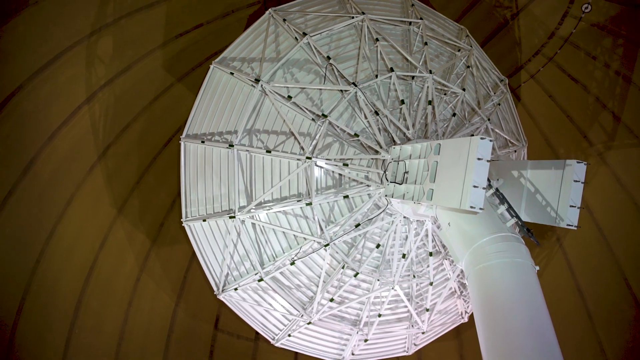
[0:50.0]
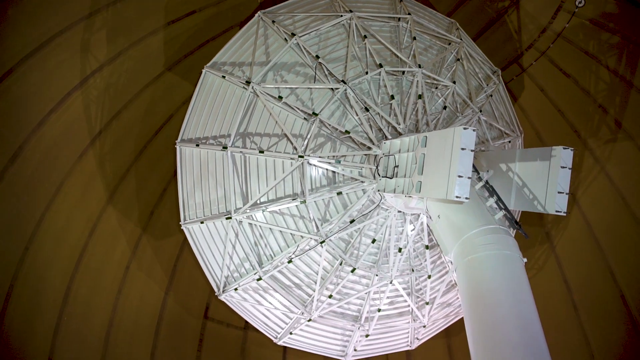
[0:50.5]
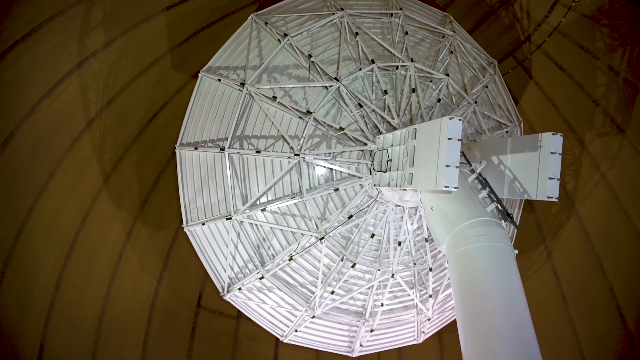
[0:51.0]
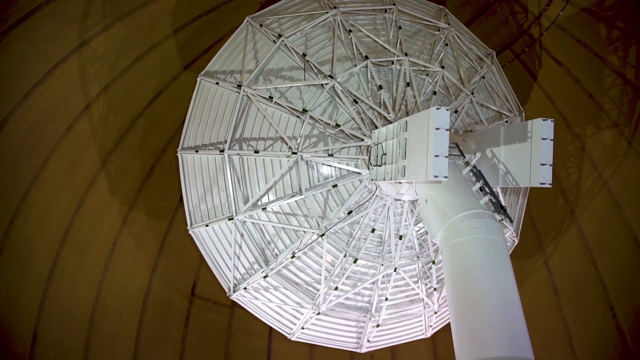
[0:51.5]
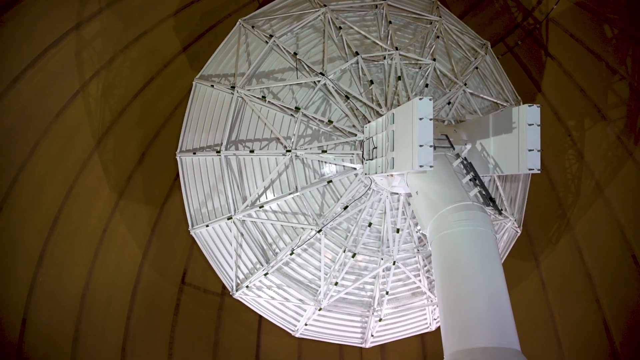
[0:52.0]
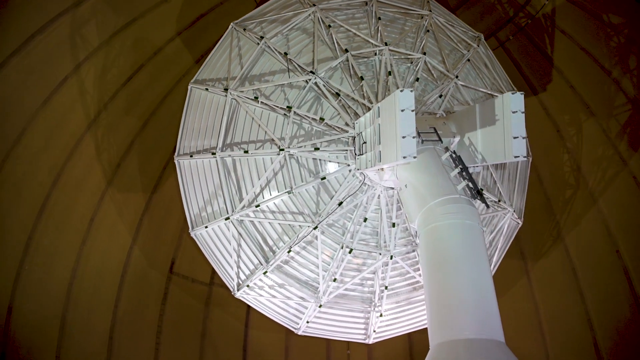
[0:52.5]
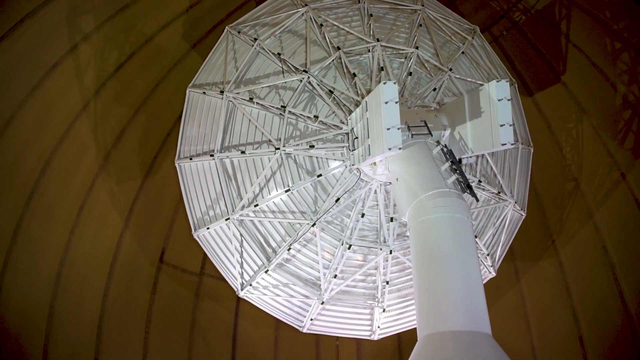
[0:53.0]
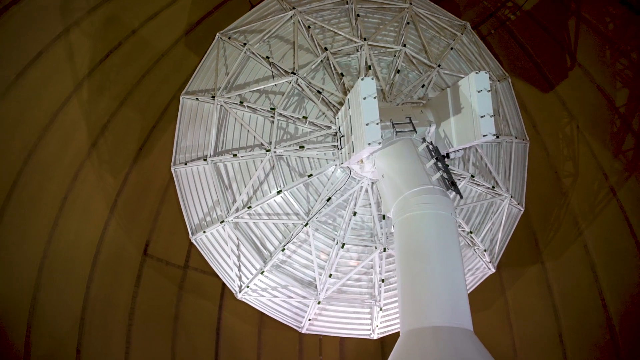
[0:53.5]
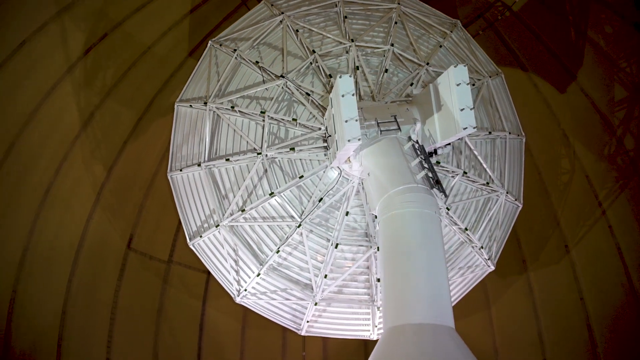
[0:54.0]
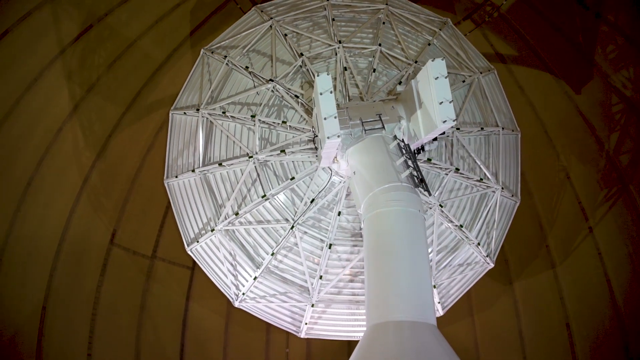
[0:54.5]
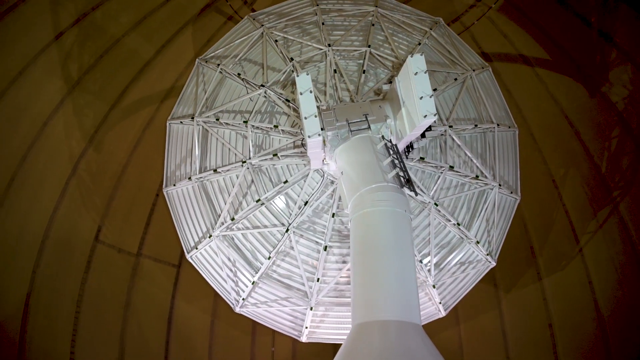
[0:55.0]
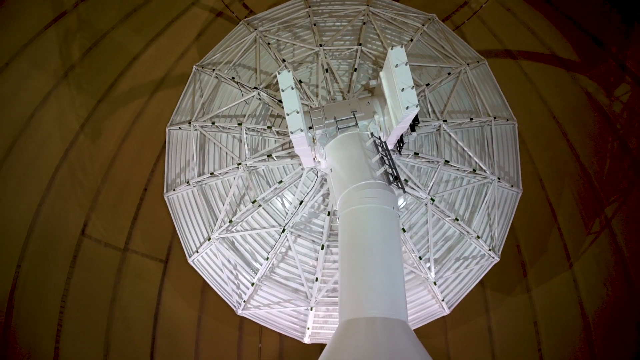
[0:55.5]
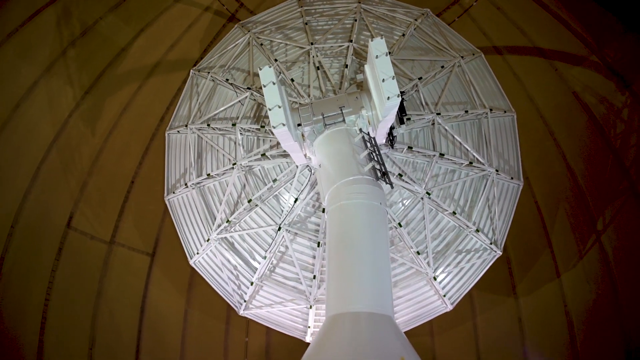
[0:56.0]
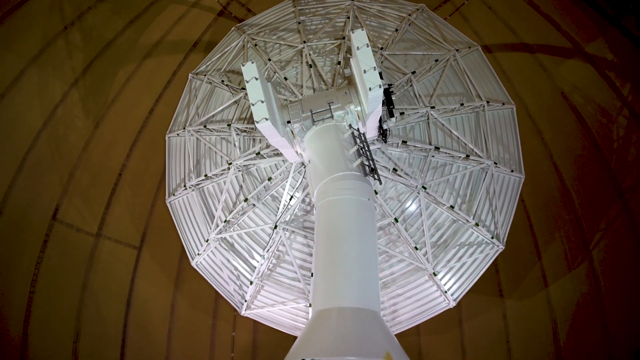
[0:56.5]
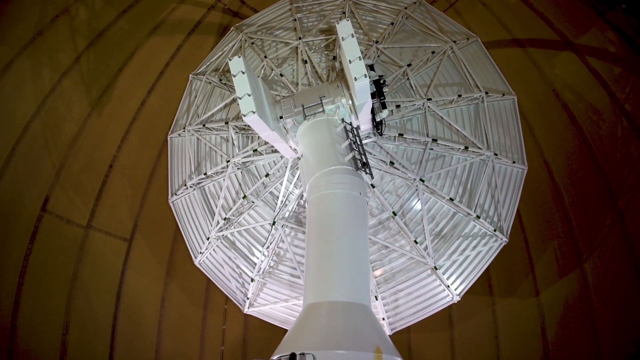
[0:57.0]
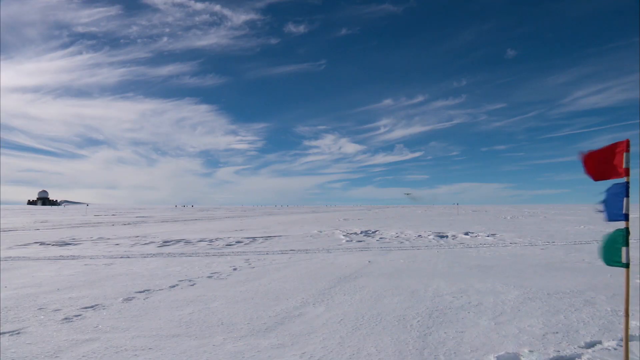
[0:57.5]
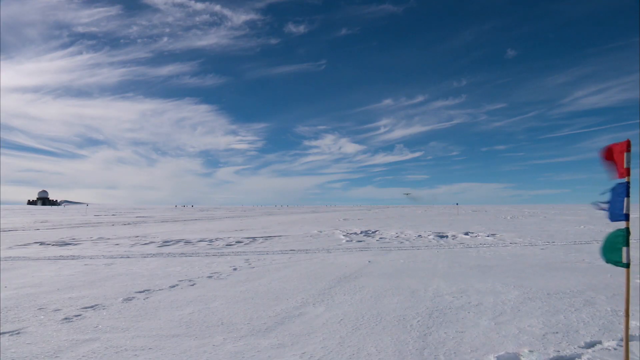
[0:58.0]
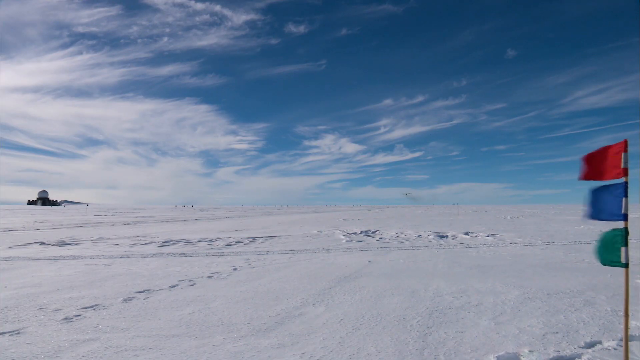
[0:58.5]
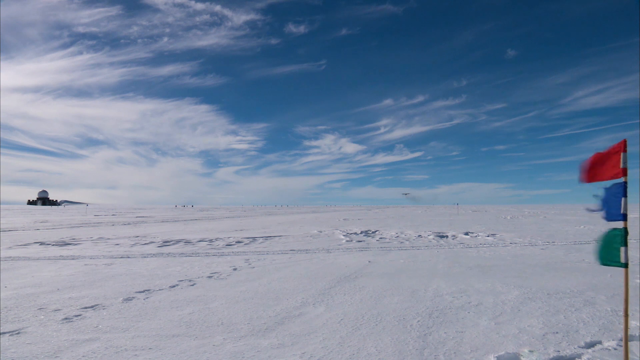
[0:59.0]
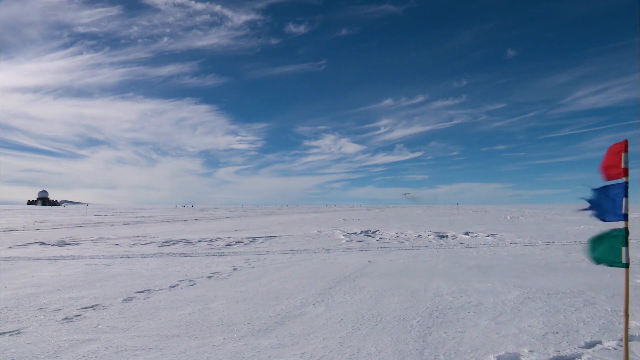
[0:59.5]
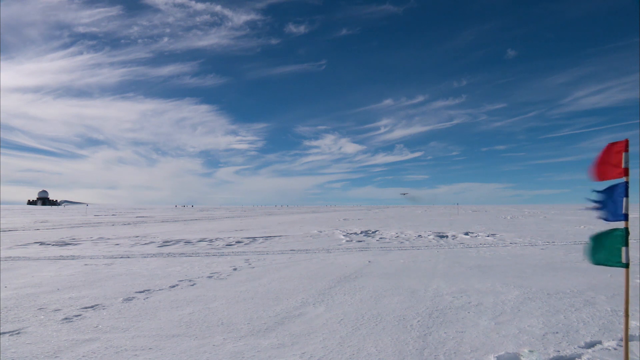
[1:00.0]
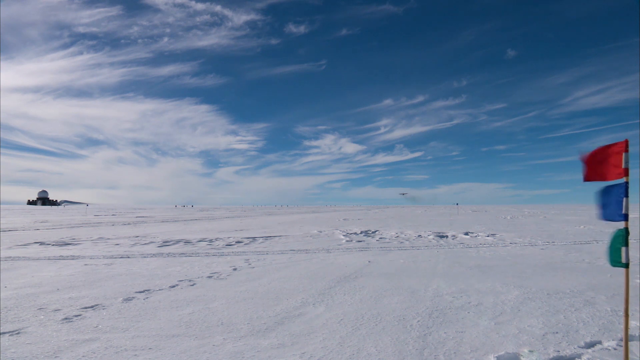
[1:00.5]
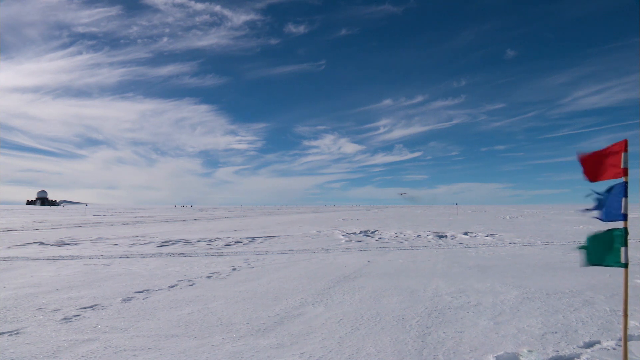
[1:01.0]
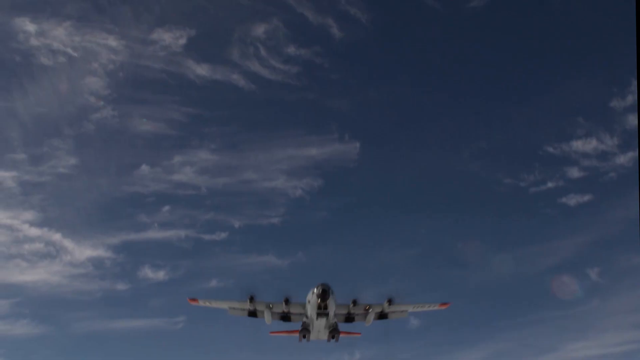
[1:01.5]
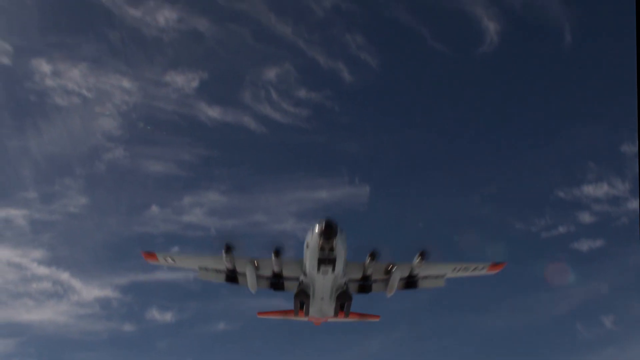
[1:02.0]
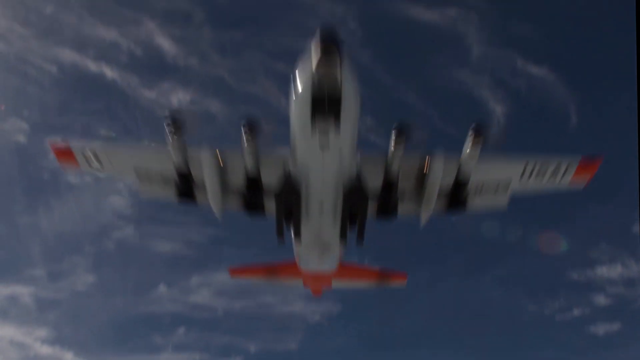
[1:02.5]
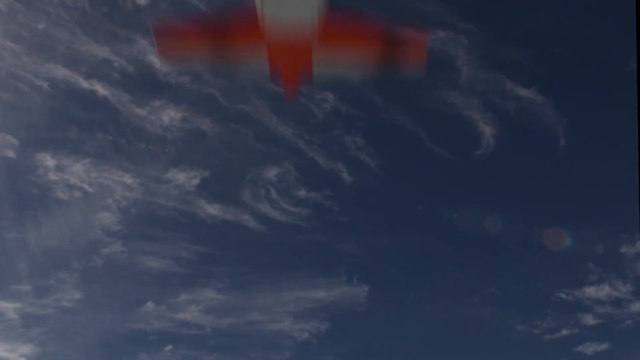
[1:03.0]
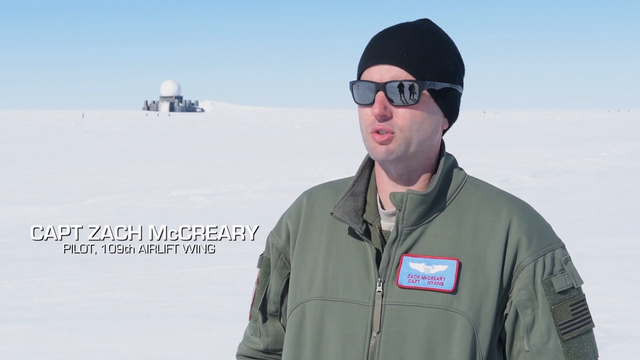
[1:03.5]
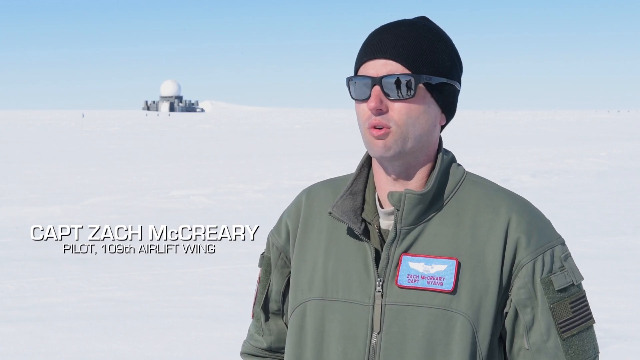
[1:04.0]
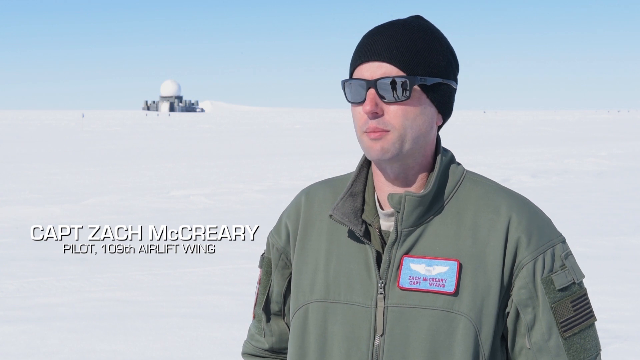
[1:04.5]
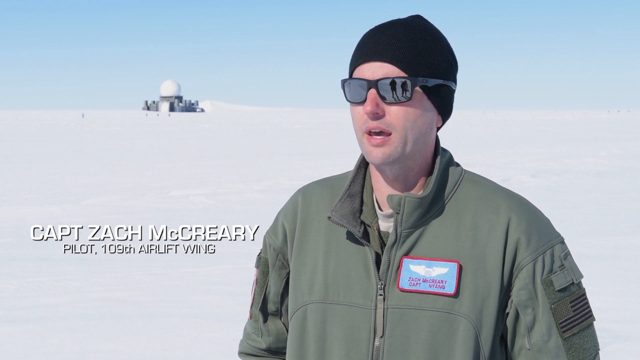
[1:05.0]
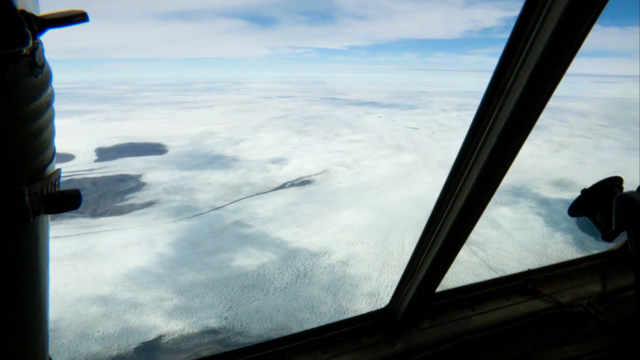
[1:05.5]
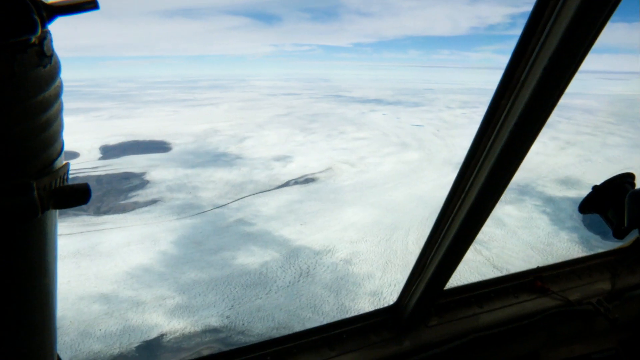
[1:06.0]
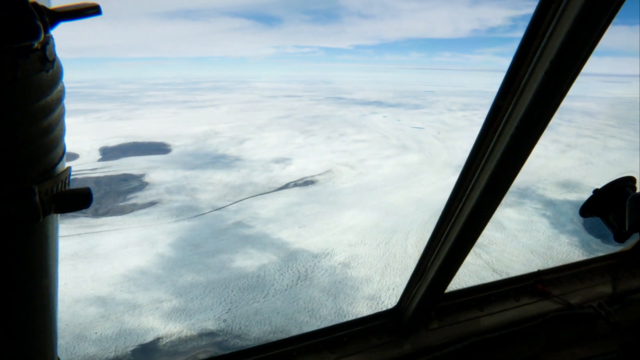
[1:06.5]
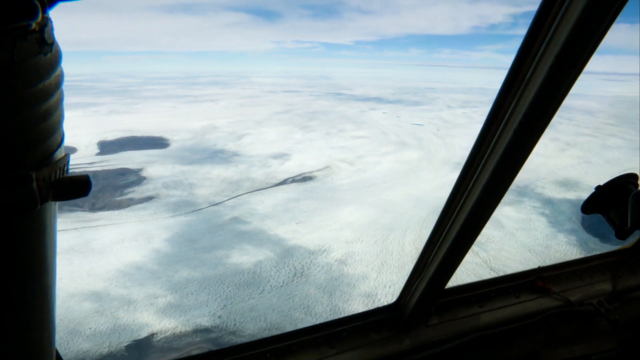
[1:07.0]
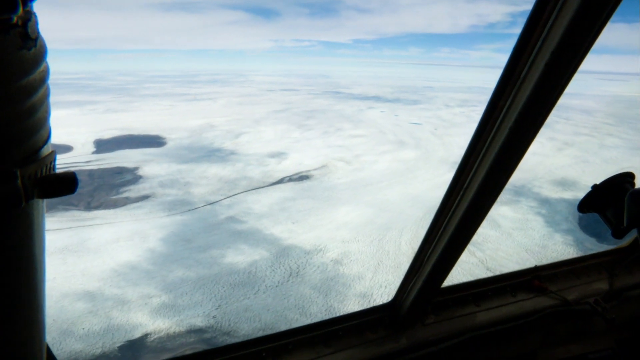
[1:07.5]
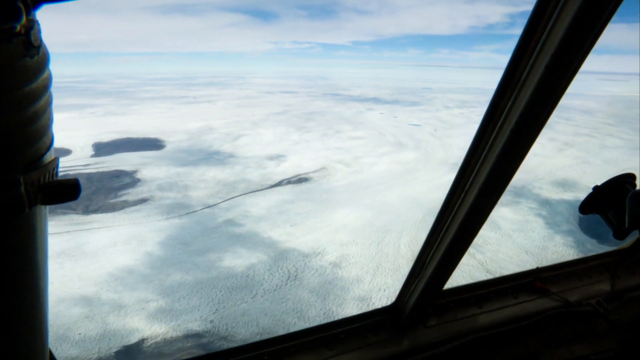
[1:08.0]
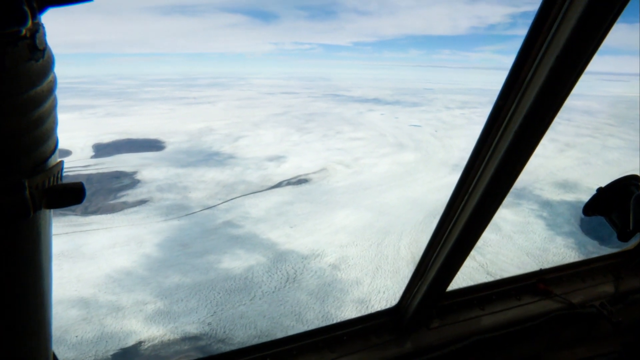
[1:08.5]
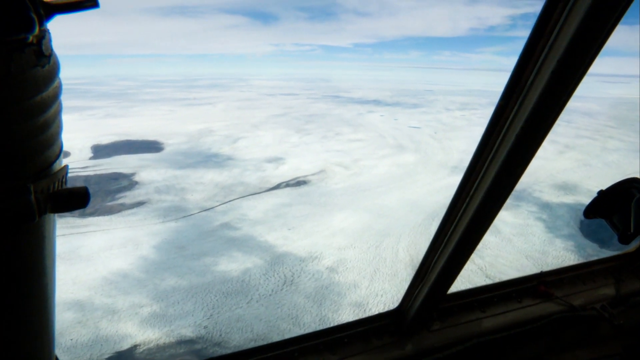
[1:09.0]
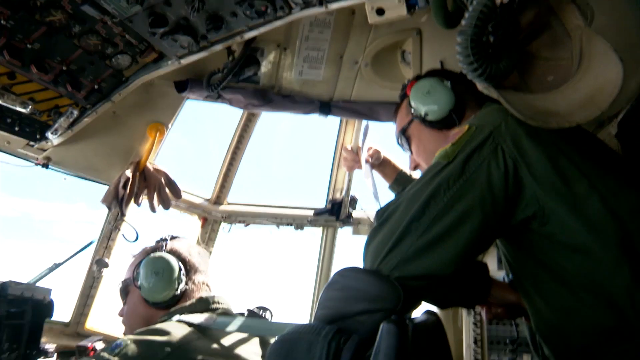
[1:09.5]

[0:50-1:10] Inside the building, the satellite rotates toward the top of the dome; it has a large arm with a disc-like shape on the end that moves around in a circle. Next comes a very snowy landscape with three flags on the right side, red, blue and green from top to bottom, flapping very fast in the wind; their sides are cut into triangular shapes. A building is in the distance on the left, and tire tracks mark the snowy surface. Another shot shows a large military plane flying overhead. A military pilot, Captain Zach McCreary, then talks to the camera, wearing an Army green uniform with an Air Force patch on his chest. He stands in front of the building seen in the distance on the left of the snowy landscape shot.